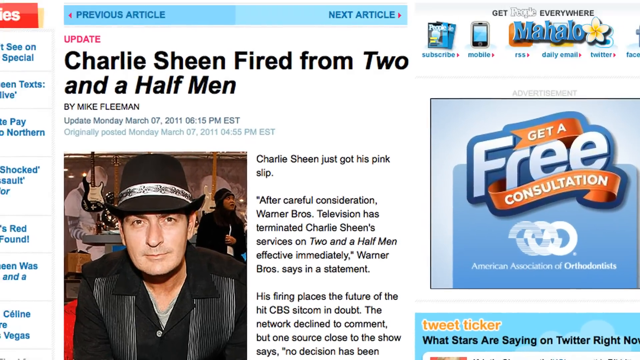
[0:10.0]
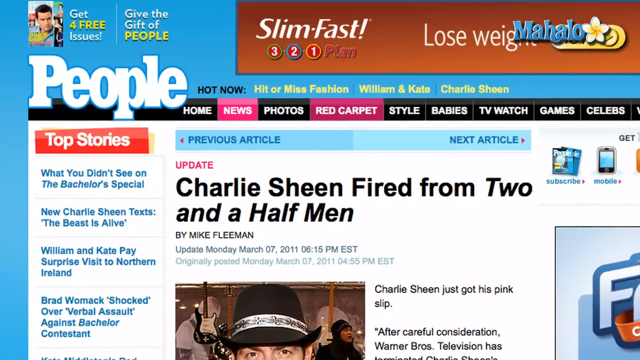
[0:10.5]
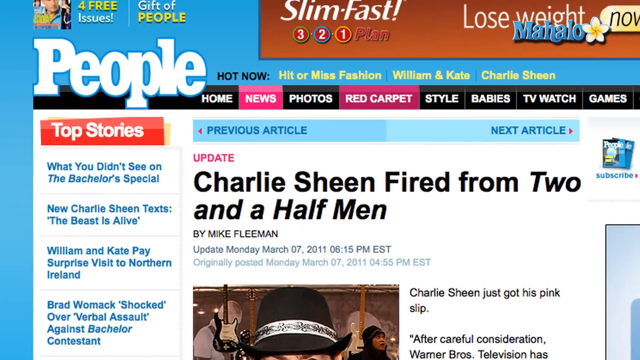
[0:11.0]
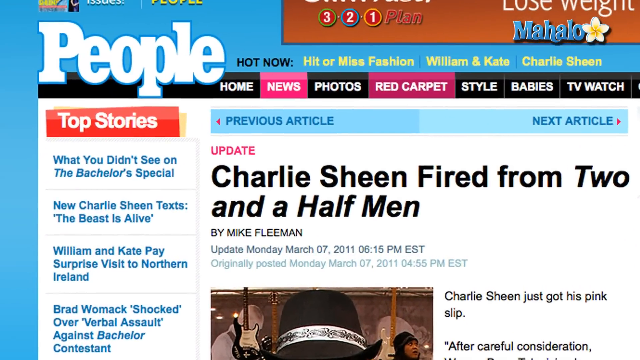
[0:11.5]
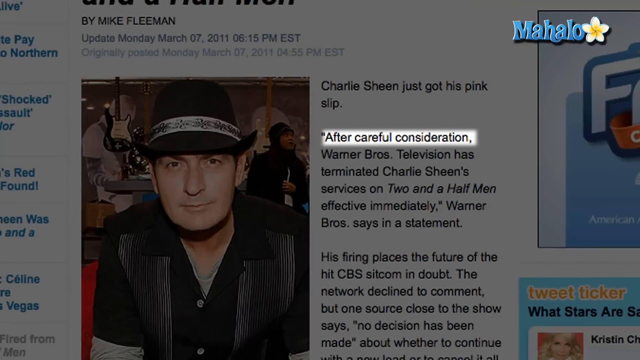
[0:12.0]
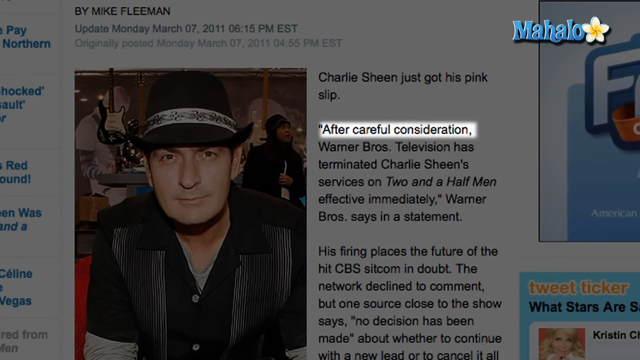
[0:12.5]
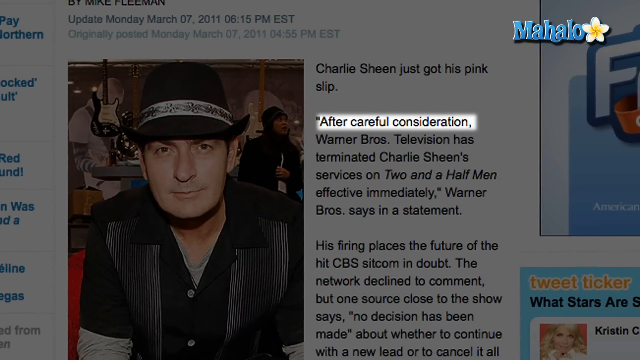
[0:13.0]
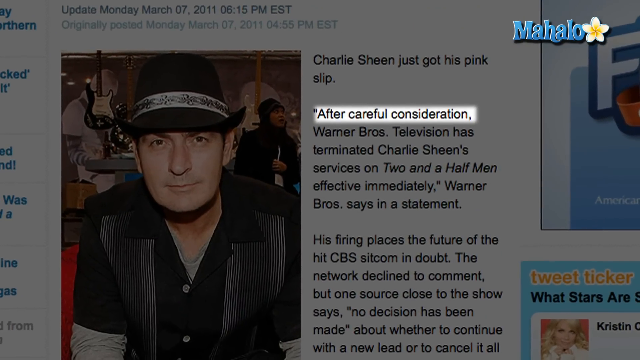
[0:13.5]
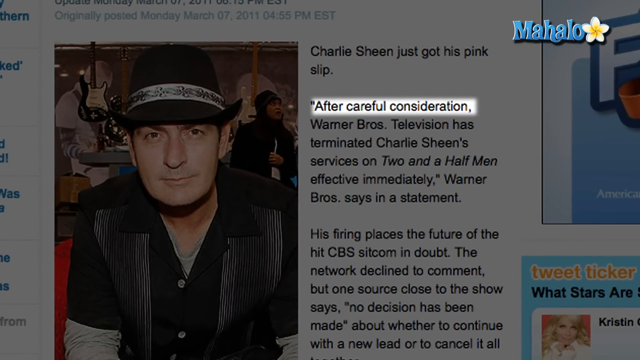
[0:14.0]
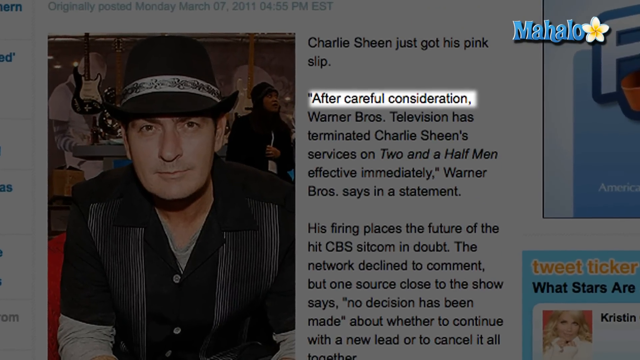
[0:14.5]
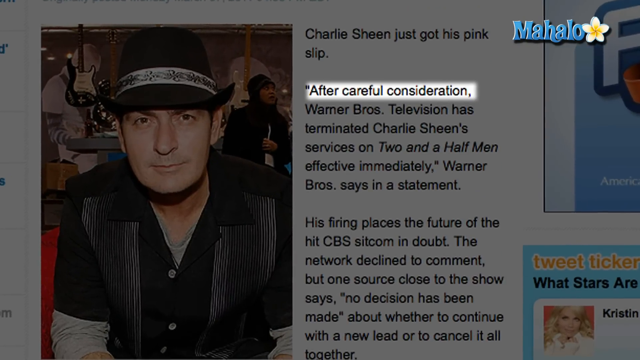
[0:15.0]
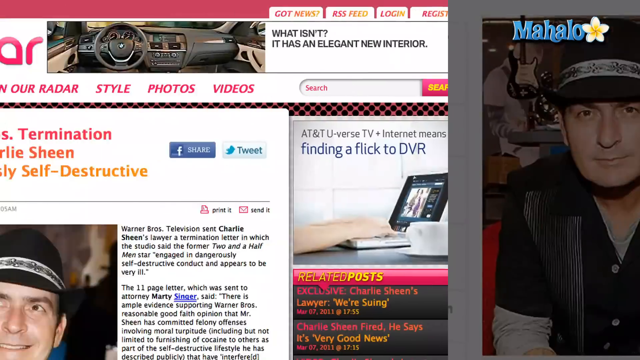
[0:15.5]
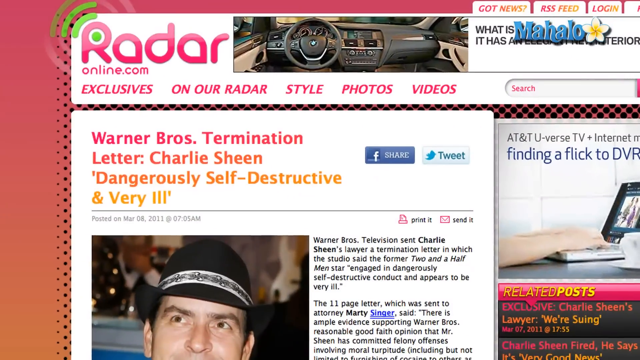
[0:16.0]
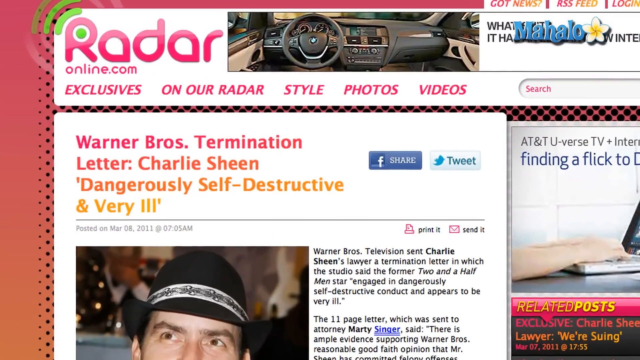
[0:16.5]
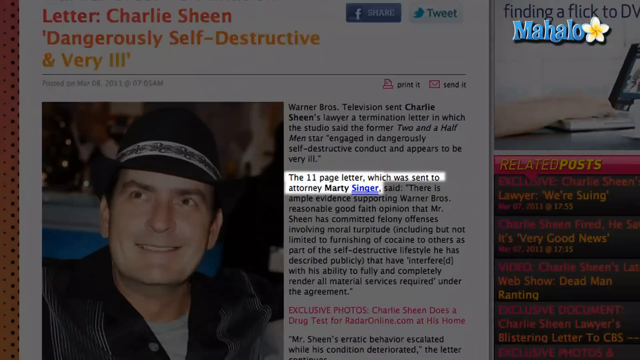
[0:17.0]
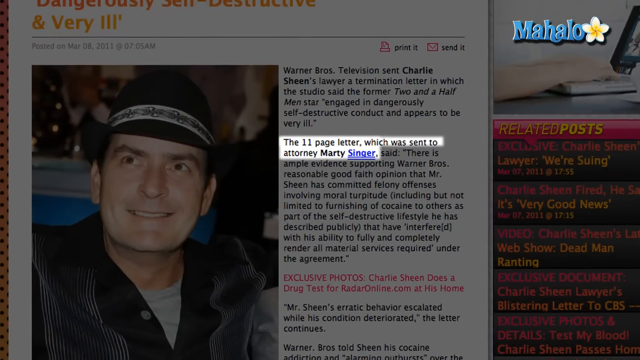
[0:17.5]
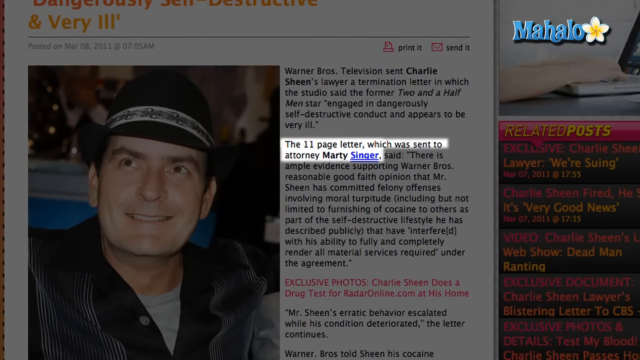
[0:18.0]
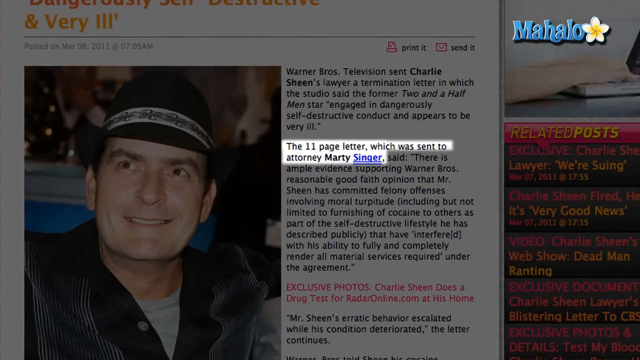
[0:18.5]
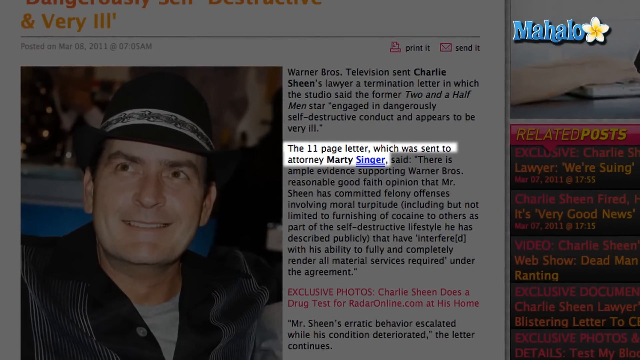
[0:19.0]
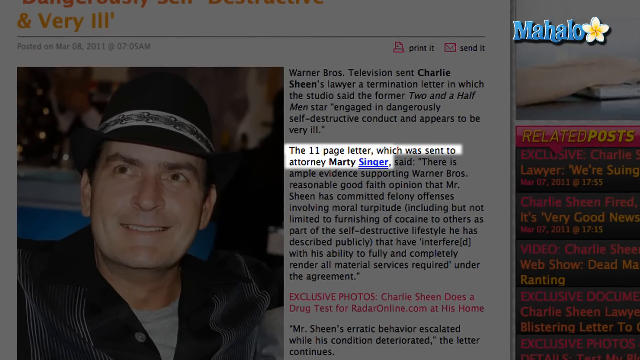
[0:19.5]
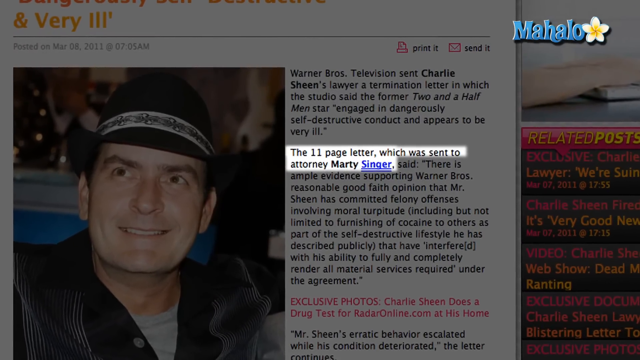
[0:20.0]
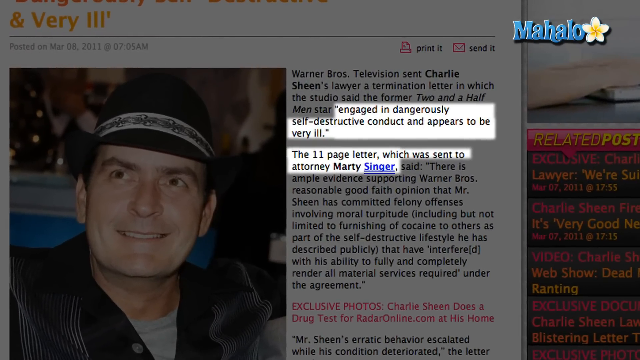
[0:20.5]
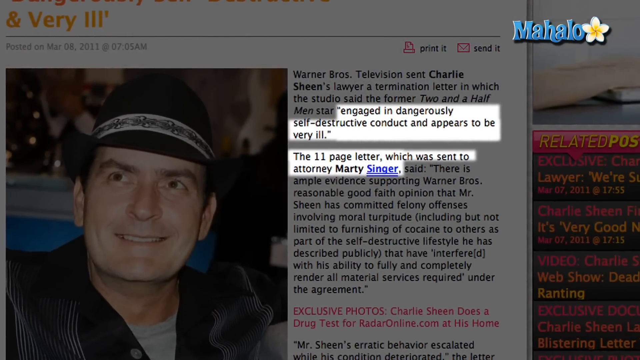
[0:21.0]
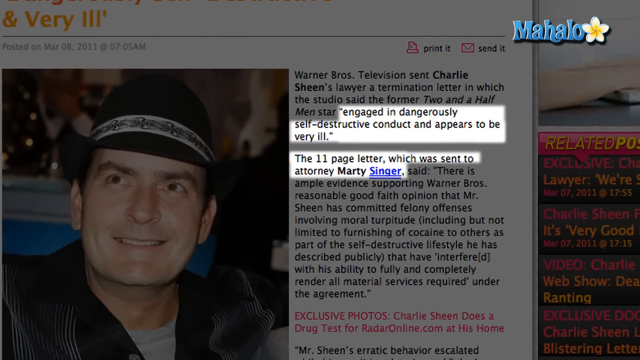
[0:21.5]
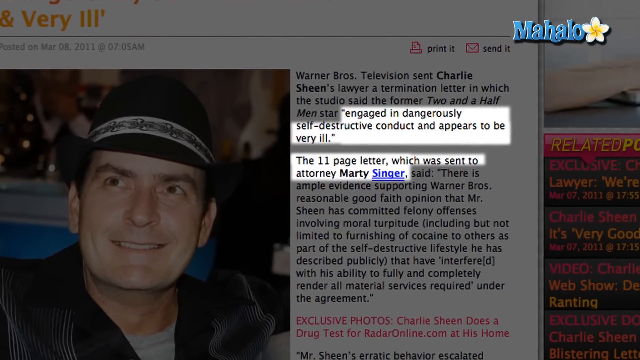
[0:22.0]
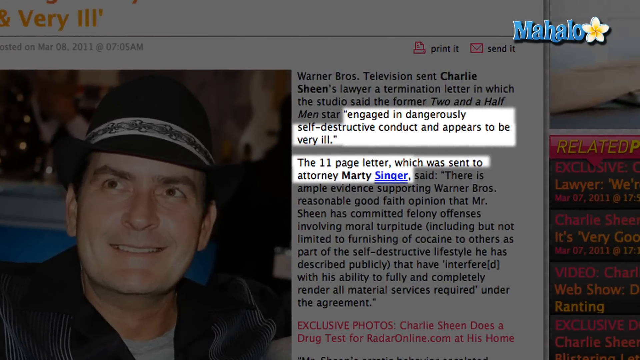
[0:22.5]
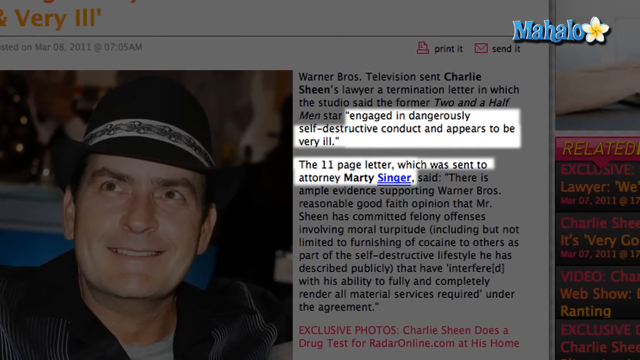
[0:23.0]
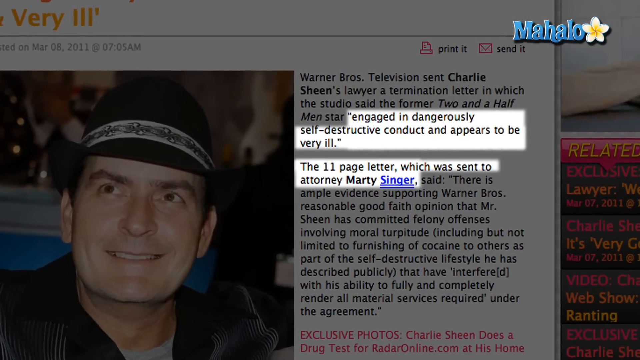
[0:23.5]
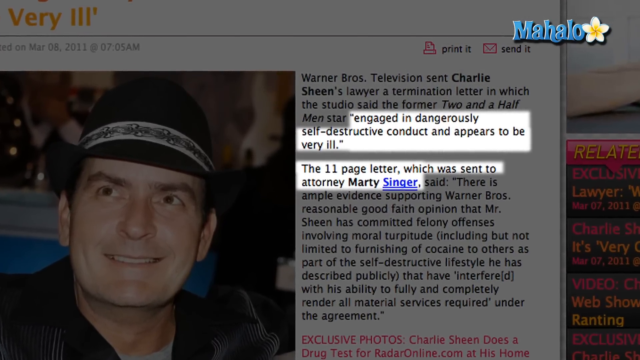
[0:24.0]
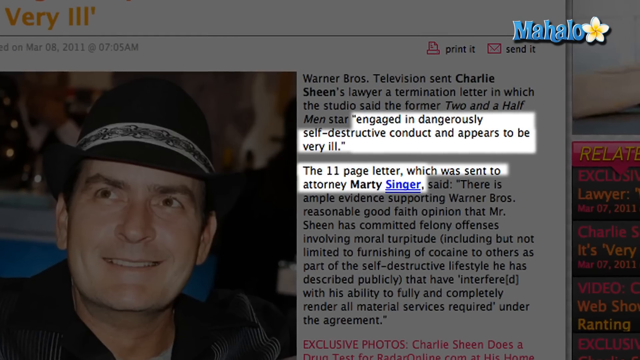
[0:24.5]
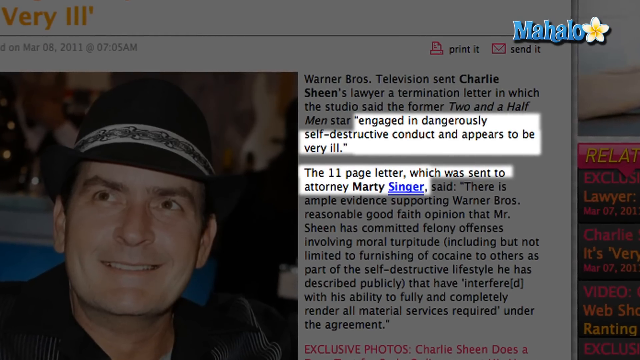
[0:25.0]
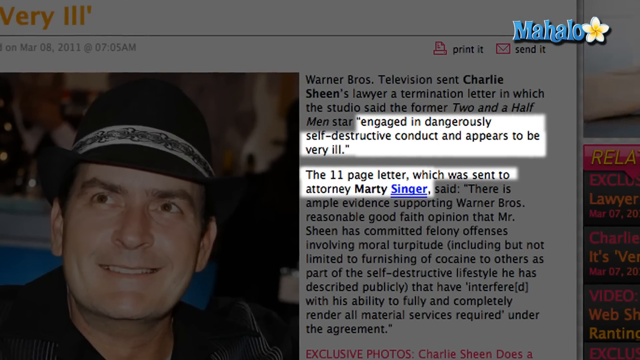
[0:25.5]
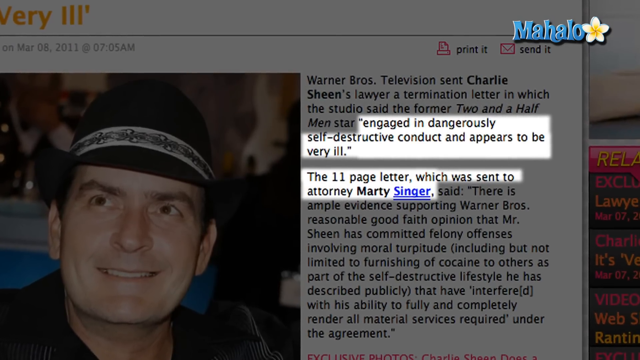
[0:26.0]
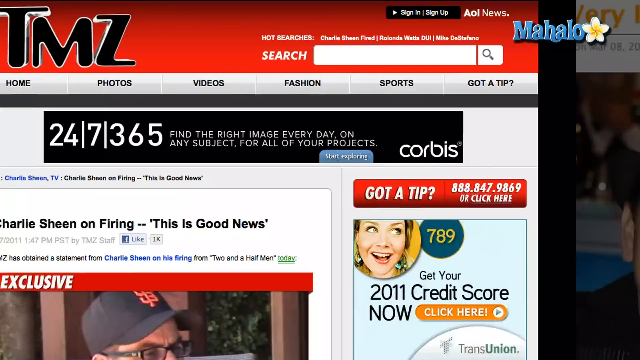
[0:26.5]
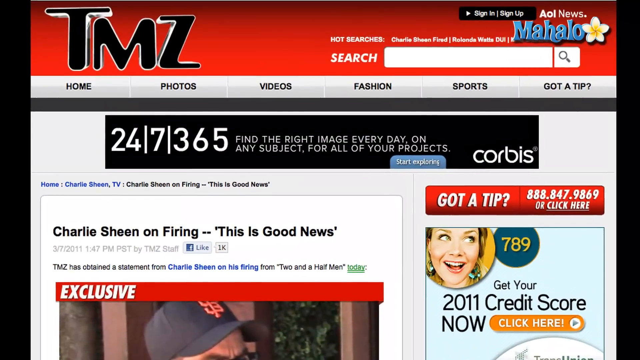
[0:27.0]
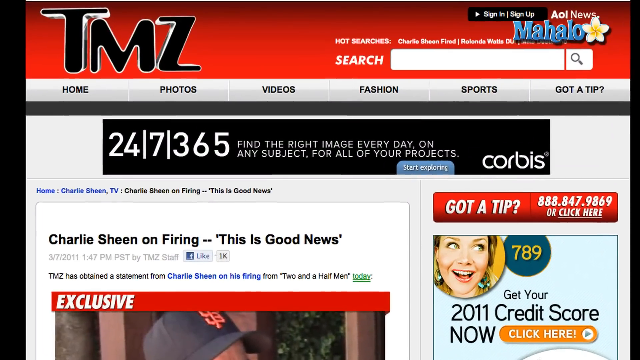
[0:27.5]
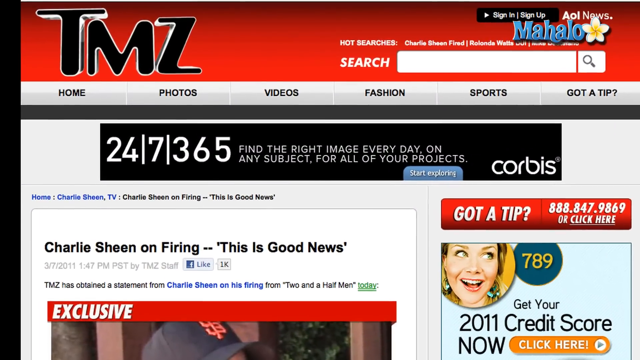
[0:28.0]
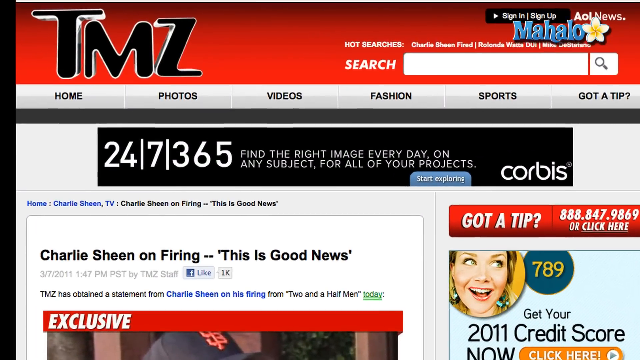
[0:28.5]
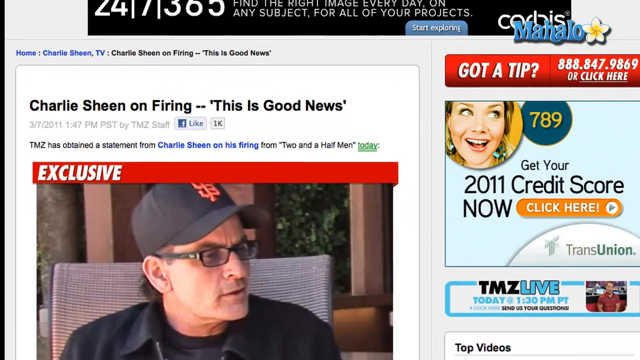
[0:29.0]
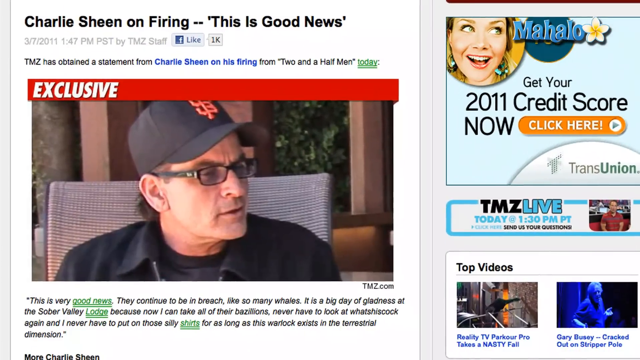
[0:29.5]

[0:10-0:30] The Mahalo report on Charlie Sheen's firing from the sitcom continues.